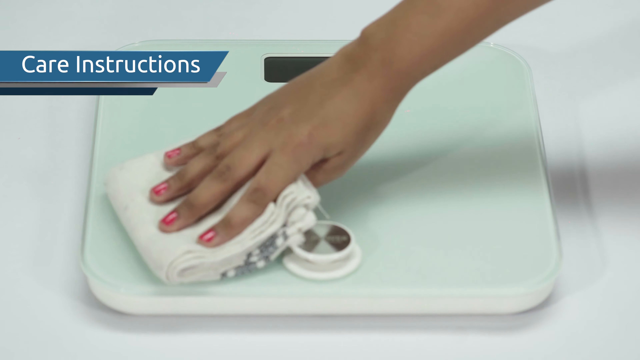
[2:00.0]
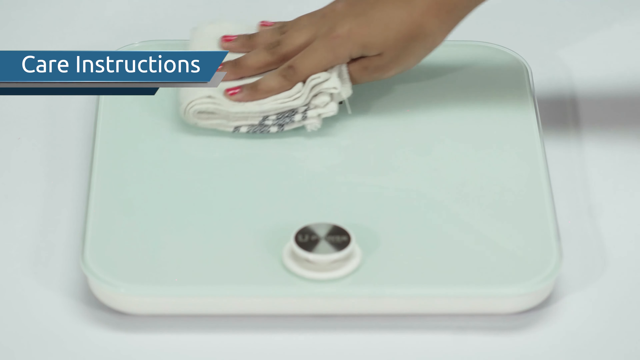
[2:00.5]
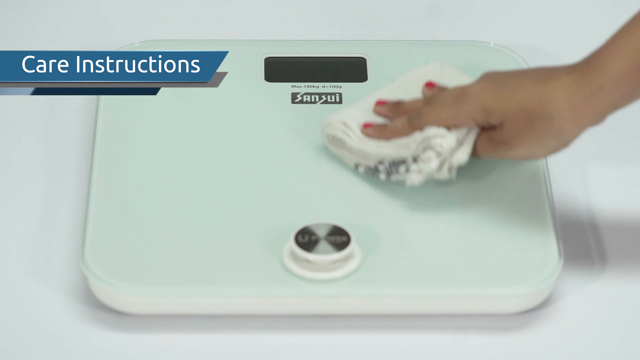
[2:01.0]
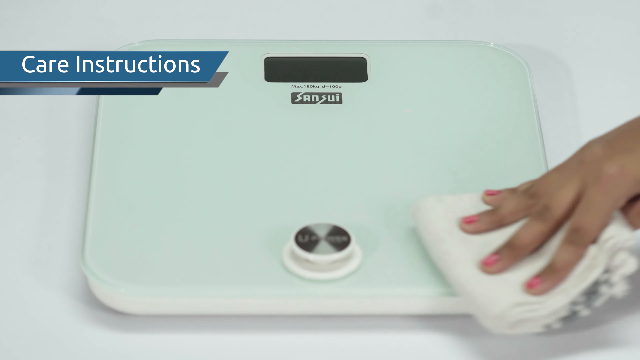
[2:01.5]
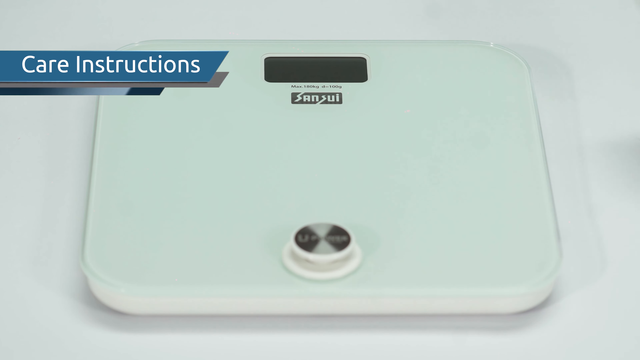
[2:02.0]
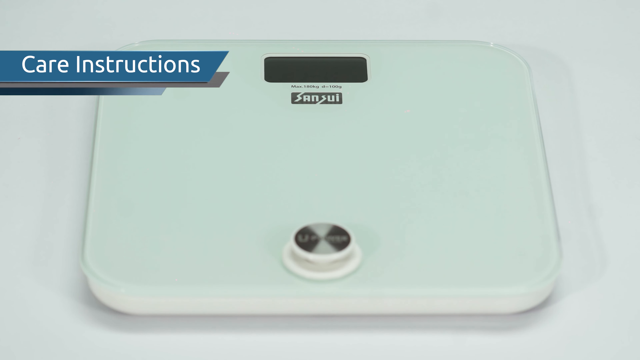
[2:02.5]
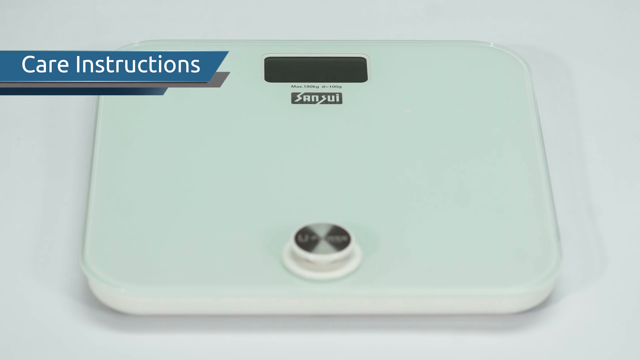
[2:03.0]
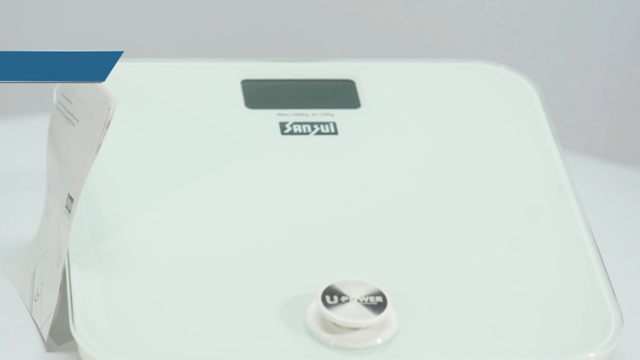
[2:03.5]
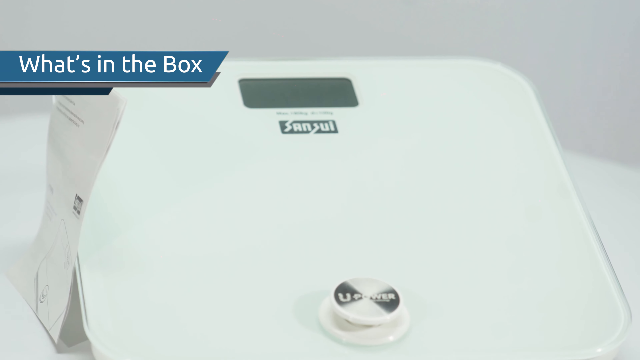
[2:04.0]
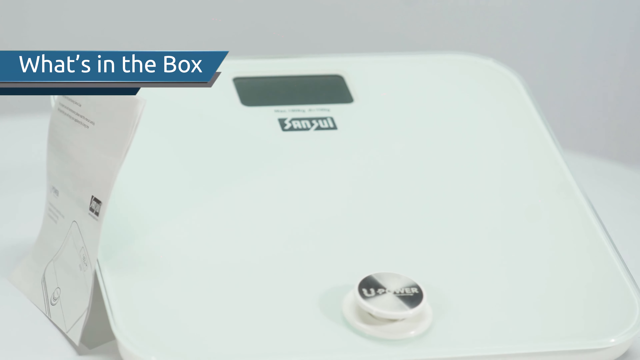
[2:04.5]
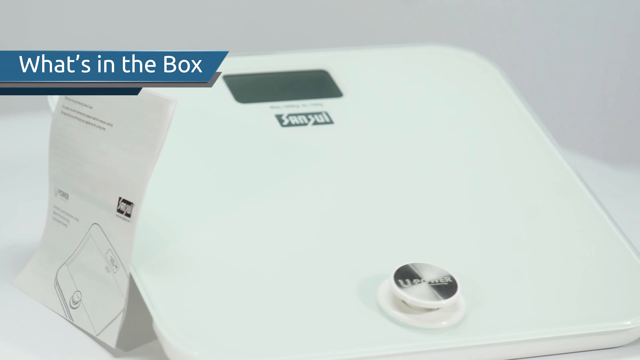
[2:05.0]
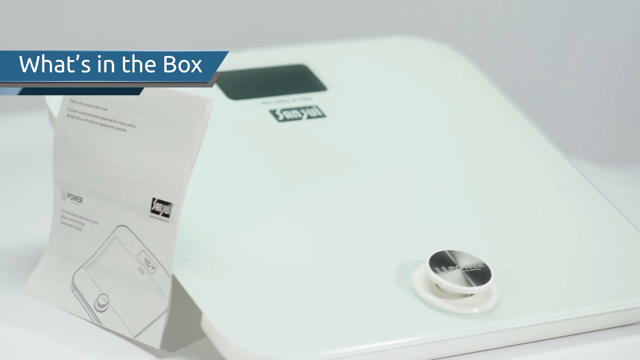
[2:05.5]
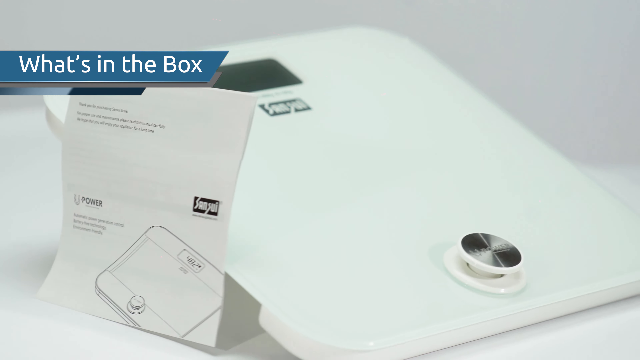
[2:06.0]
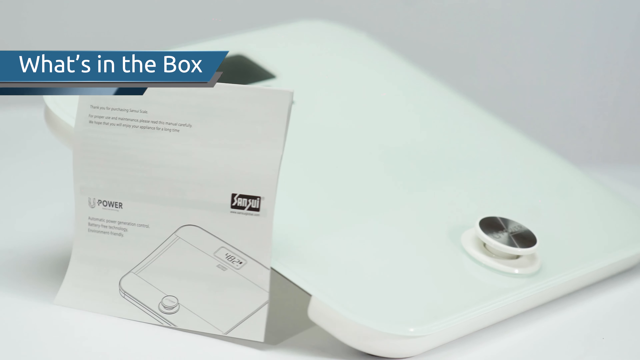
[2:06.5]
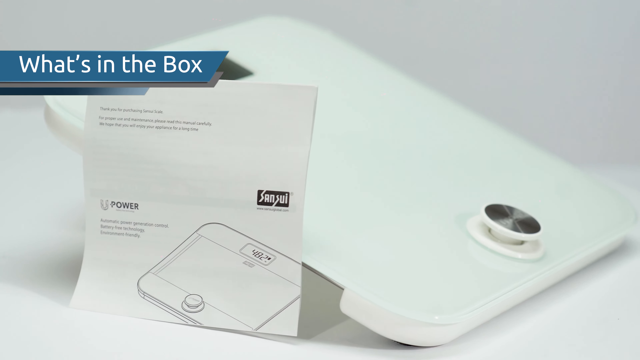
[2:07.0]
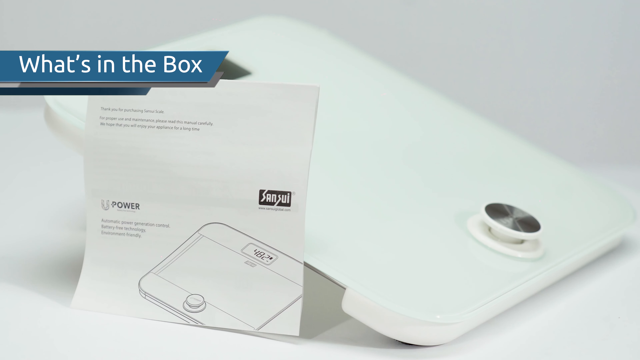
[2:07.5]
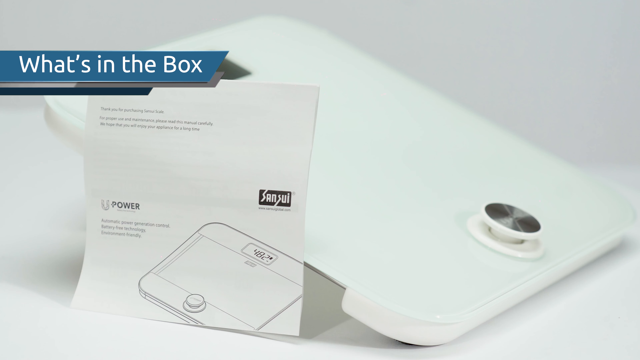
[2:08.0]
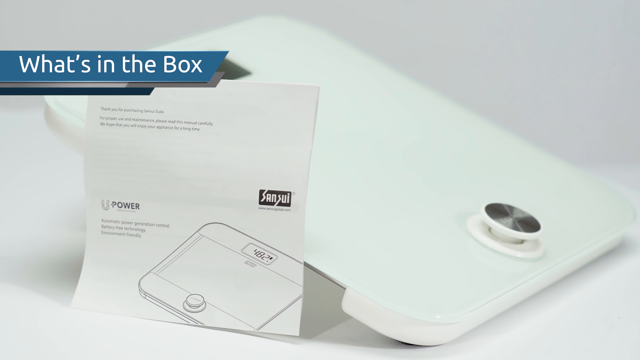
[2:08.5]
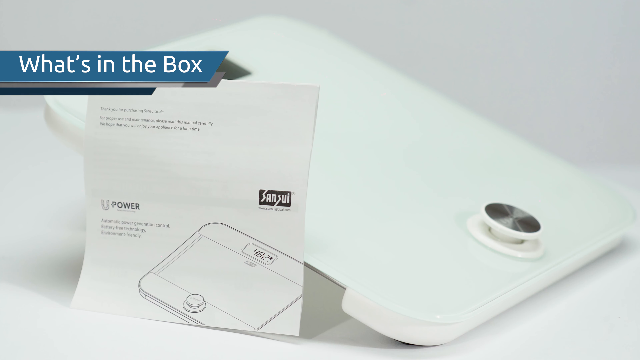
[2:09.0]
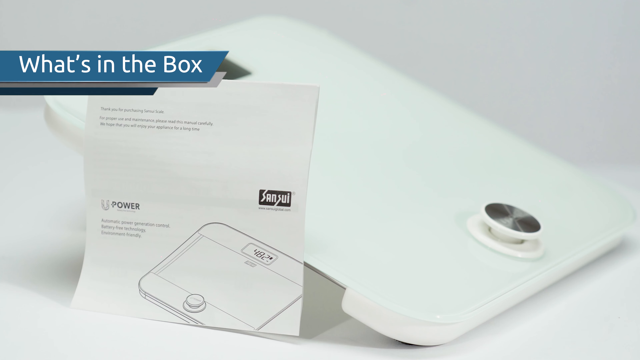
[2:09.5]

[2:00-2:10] A woman's hand holds a rag and wipes slim white scales, which have a button at the bottom end. The words "care instructions" in white writing with a black box appear in the top left, as do the words "what's in the box", which appear to indicate what comes in the box with the scales. The woman very gently wipes the scales down with a soft cloth. Written instructions provided with the scales are clearly shown, leaning on the scales, apparently showing what is received when ordering them. The woman uses her right hand and has pink nail varnish on her nails. This goes around in a loop, showing the same thing over and over.